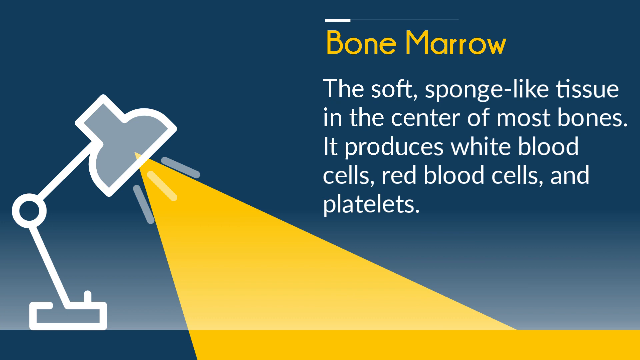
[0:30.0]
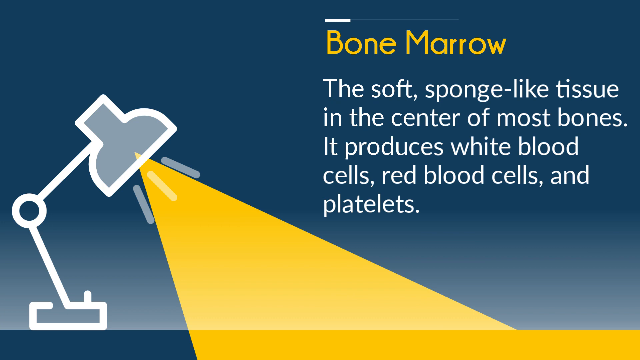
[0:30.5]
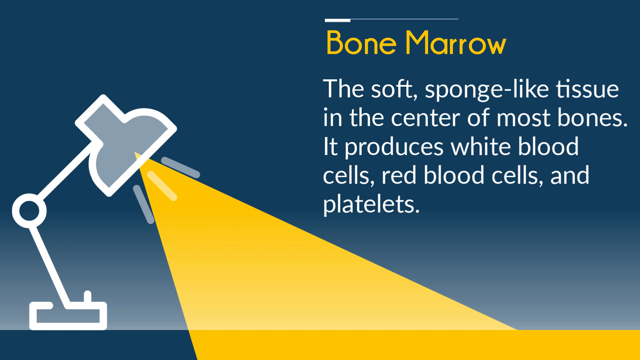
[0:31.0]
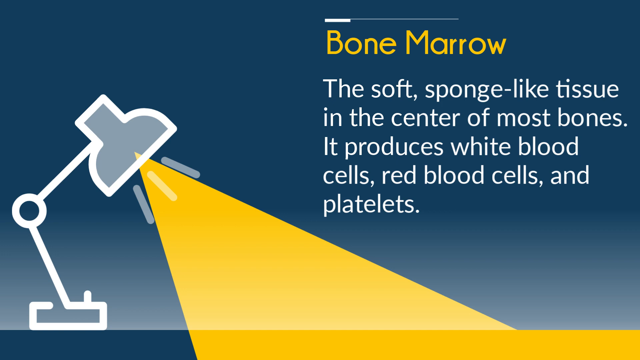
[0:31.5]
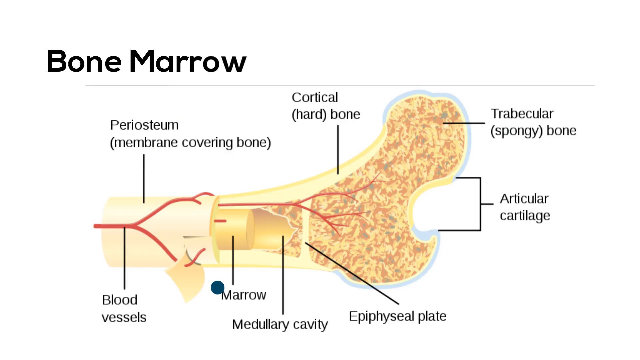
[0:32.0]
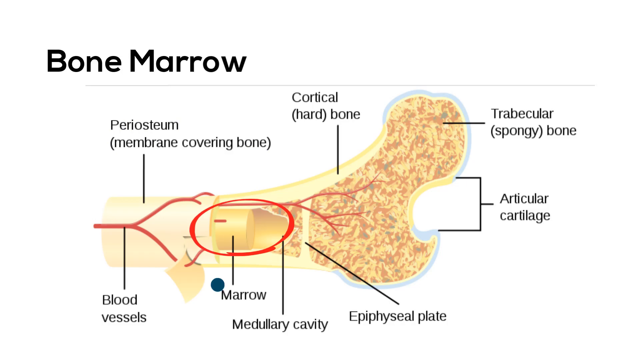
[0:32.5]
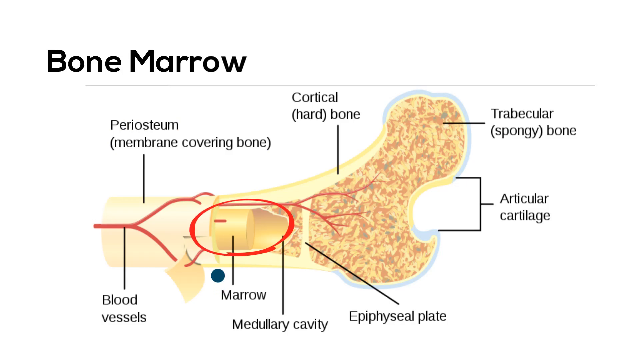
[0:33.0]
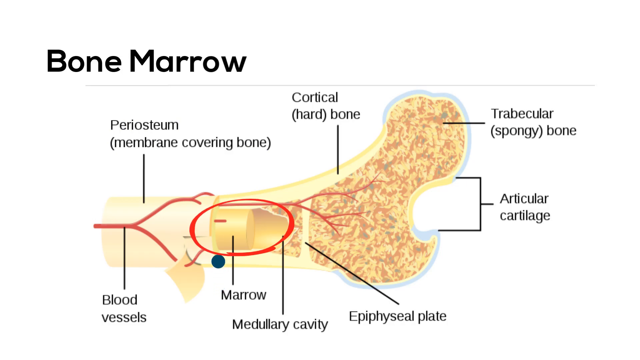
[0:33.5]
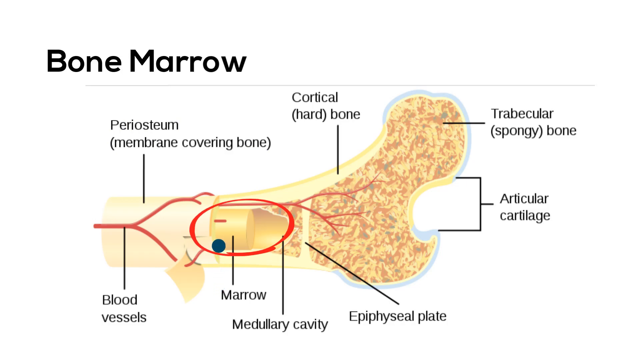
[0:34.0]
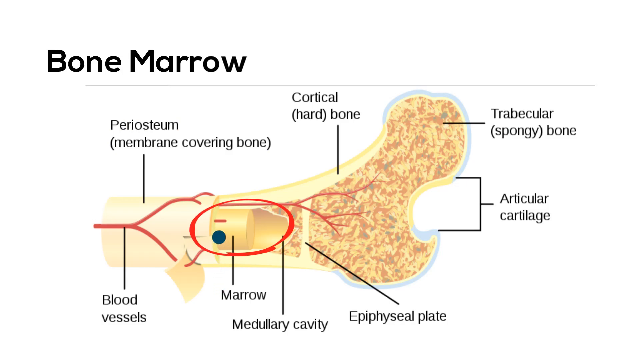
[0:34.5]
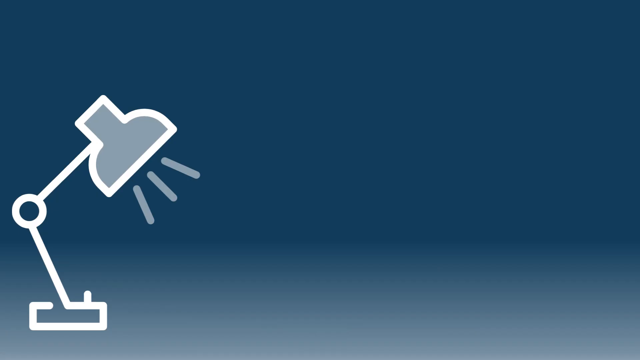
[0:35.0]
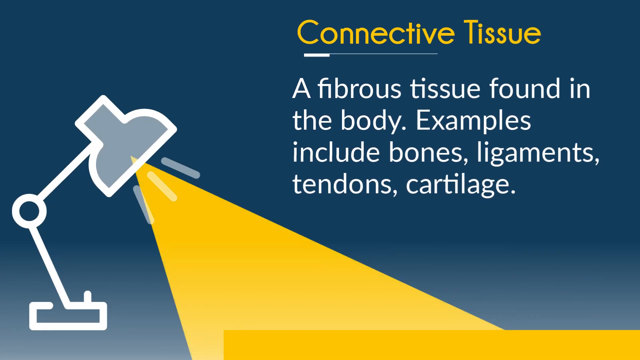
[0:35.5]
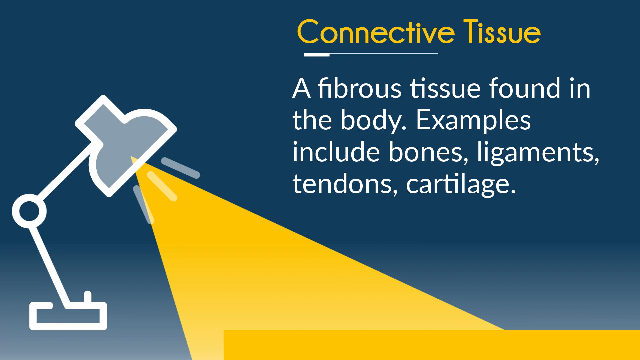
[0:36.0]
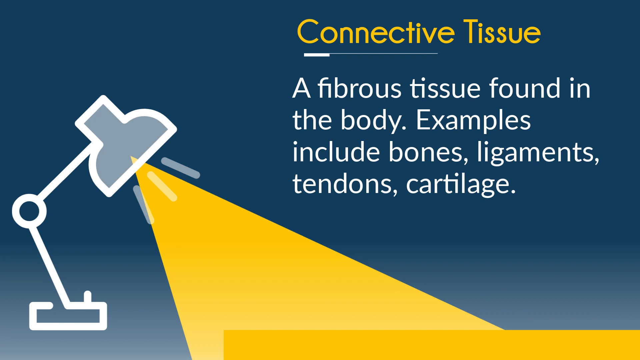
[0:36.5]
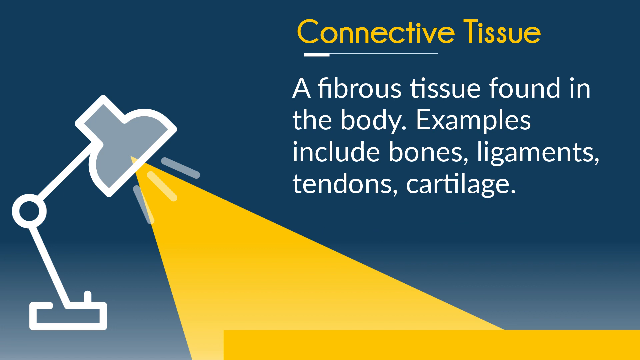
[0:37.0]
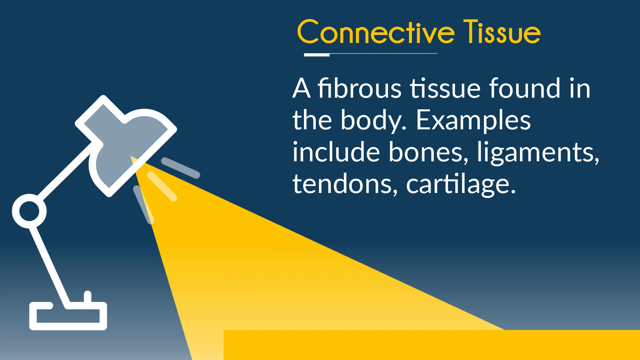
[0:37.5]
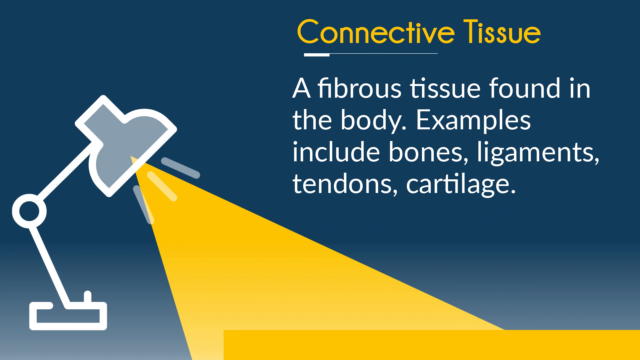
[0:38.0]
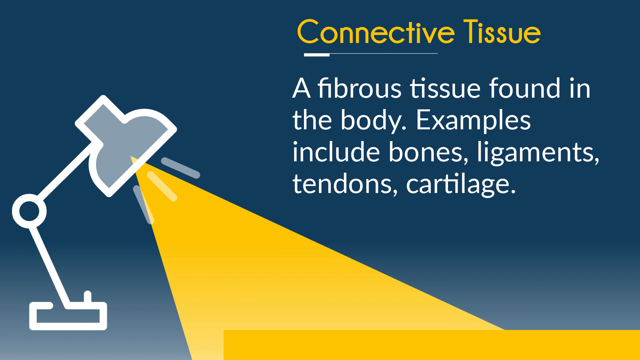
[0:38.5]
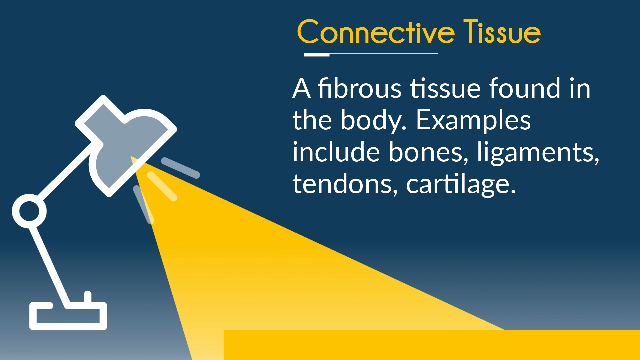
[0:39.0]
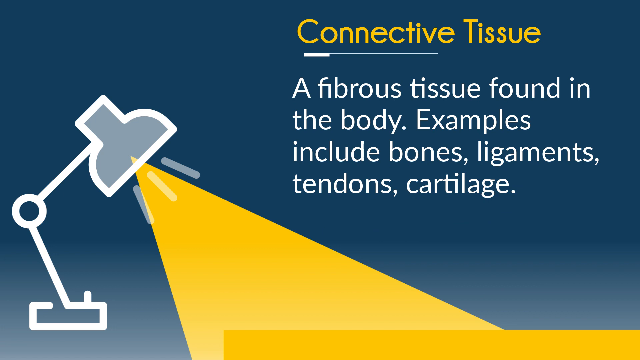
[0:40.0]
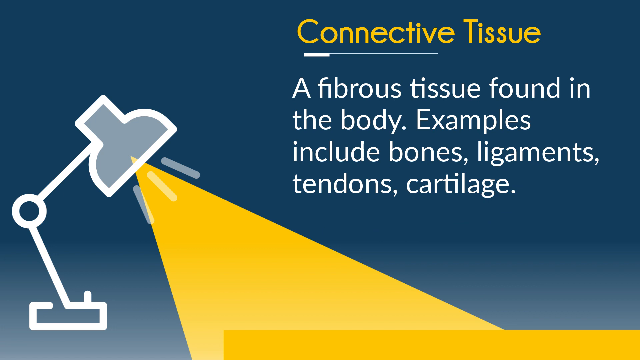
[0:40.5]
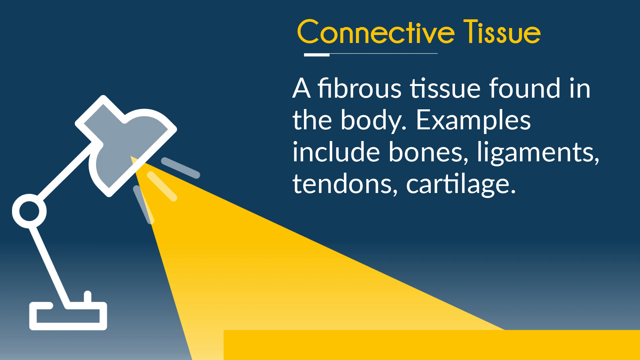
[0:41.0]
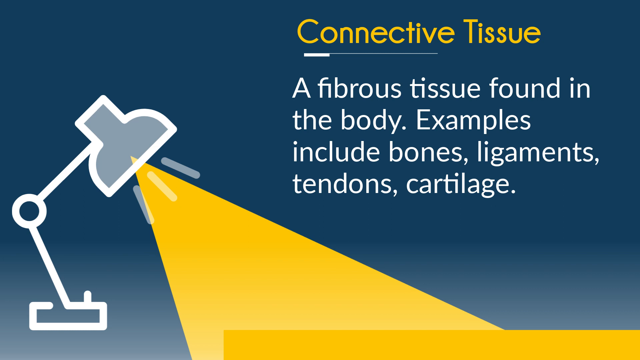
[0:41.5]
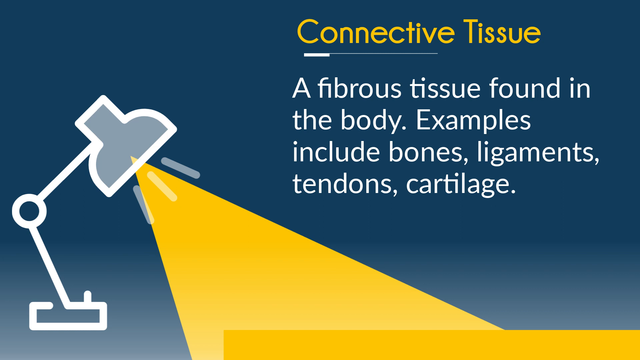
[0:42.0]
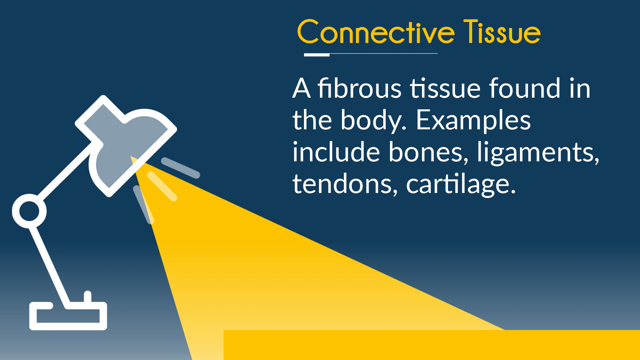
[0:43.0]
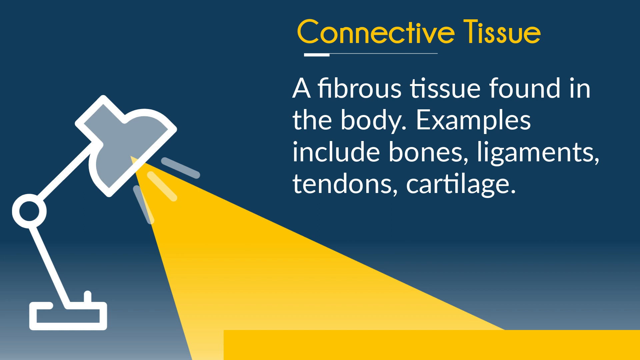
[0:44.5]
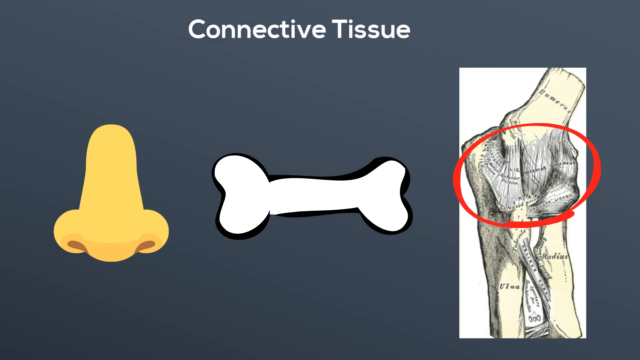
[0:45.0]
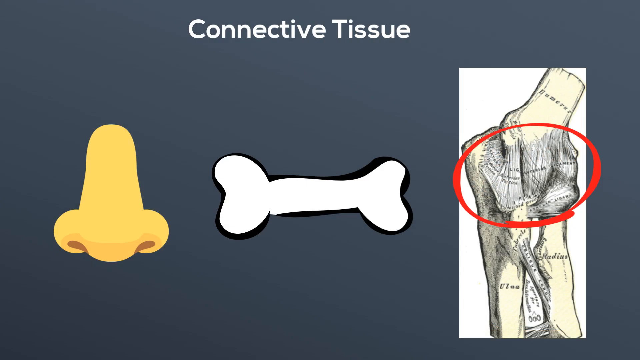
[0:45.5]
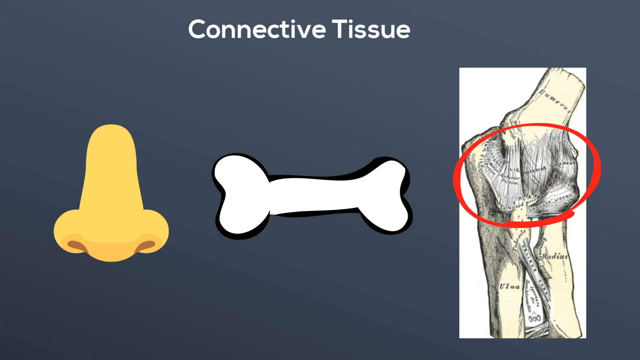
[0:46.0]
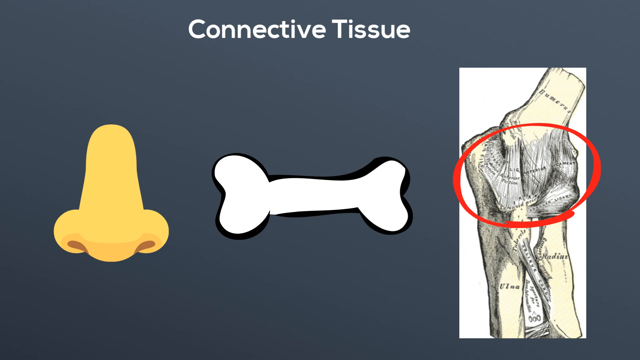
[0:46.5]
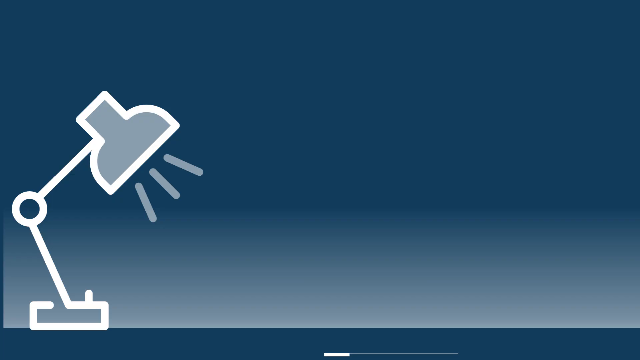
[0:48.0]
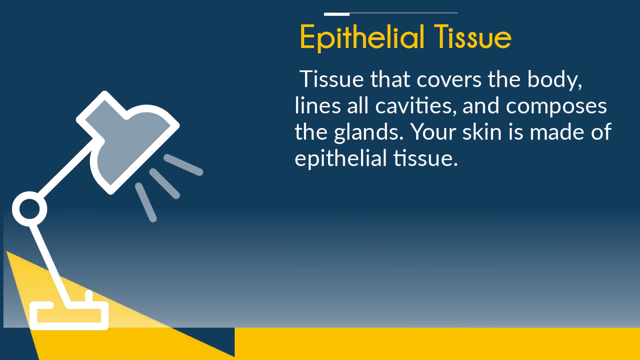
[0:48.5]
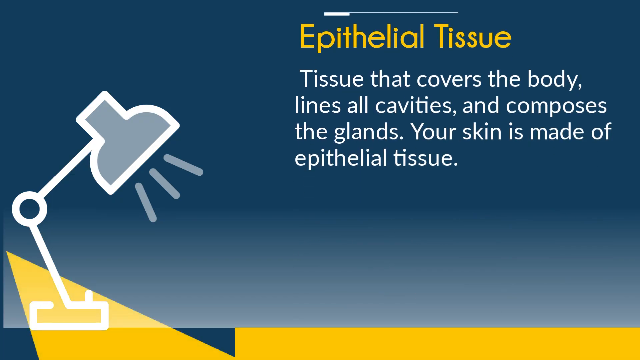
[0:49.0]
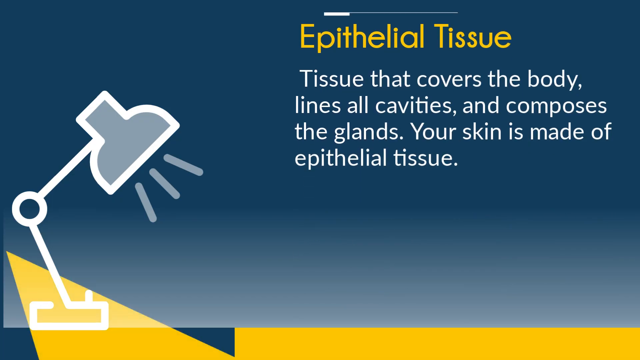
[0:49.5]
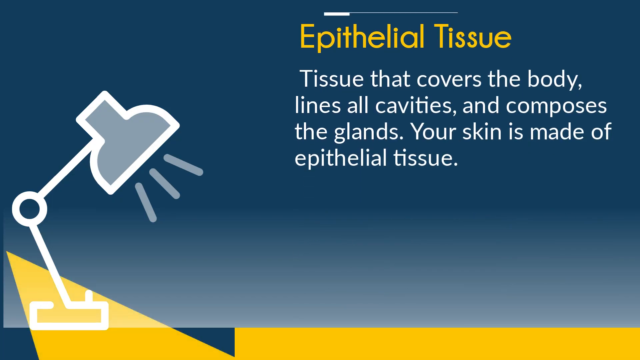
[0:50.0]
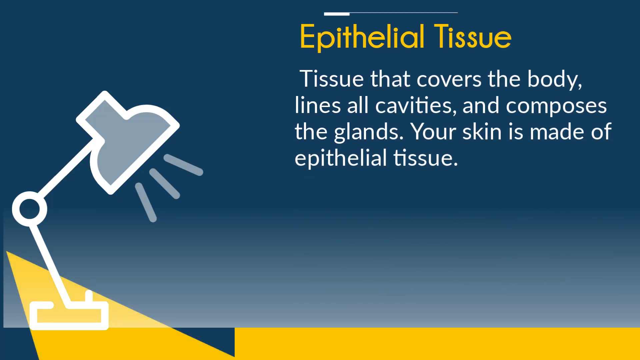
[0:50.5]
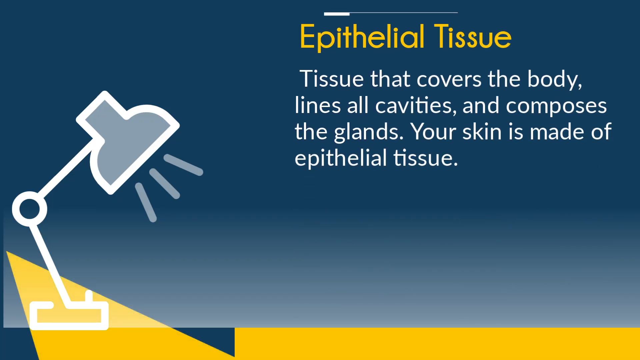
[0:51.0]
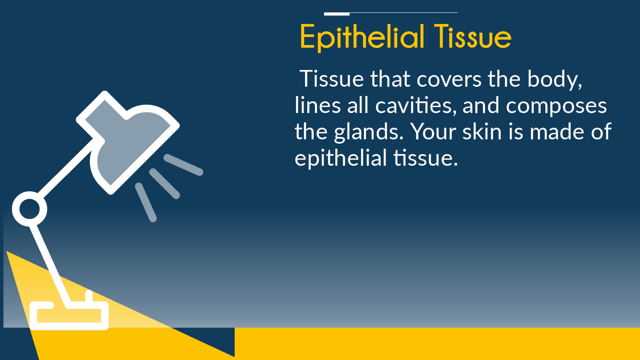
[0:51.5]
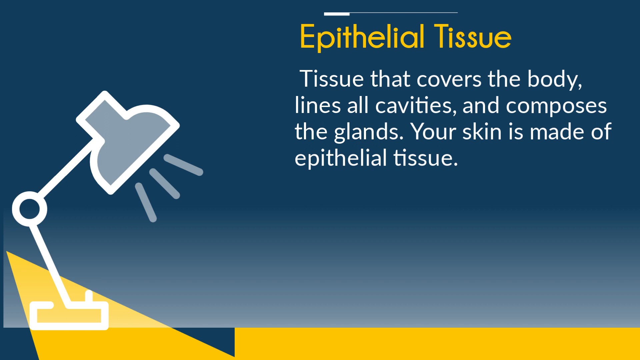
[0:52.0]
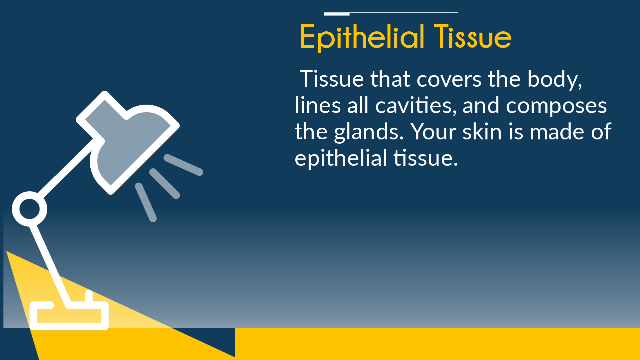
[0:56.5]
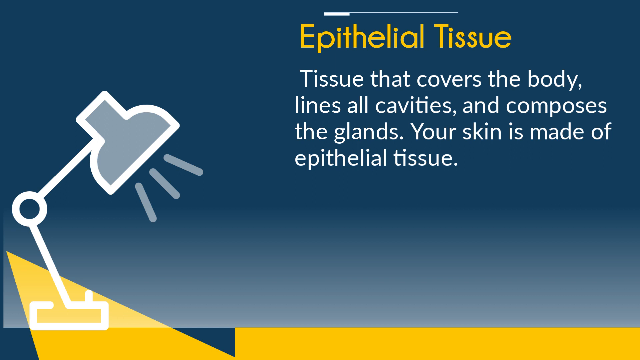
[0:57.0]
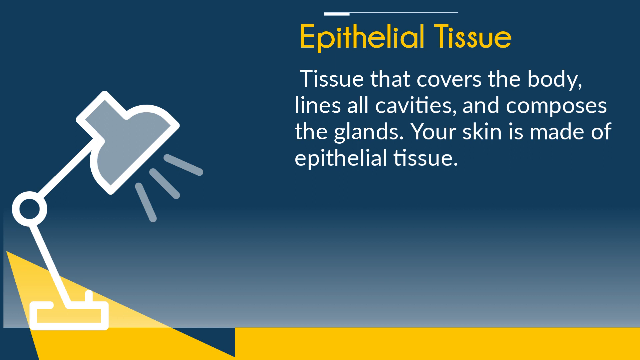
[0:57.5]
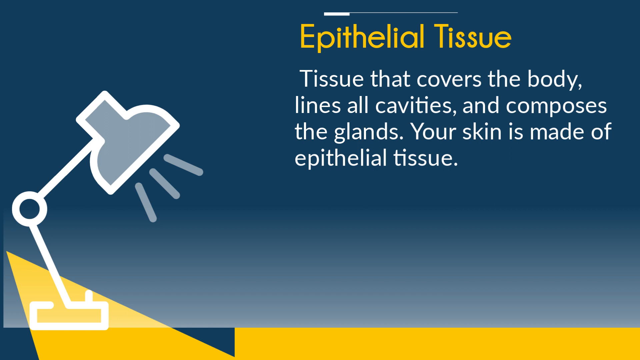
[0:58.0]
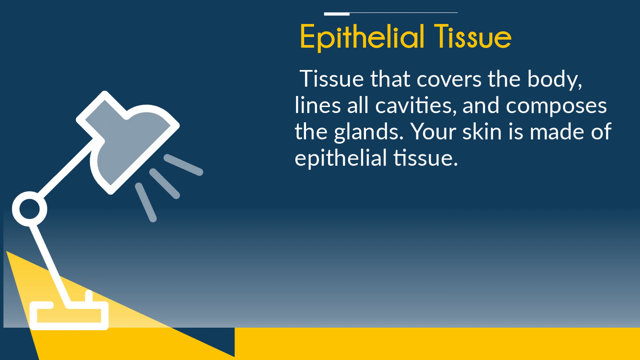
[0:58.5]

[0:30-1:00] A cartoon desk lamp beams light from top to bottom beside the definition of bone marrow: "the soft sponge-like tissue in the center of most bones. It produces white blood cells, red blood cells, and platelets." The scene transitions to a diagram of bone marrow, with words indicating where specific parts are, including "cortical" and the marrow in the center. The video then returns to the desk lamp page with a new word, "connective tissue", defined as "a fibrous tissue found in the body. Examples include bones, ligaments, tendons, and cartilage." Next, three different kinds of organs are shown: a nose, a bone, and a connective tissue. Another definition page then introduces the word "epithelial tissue", stating that it is tissue that covers the body, lines all cavities, and composes the glands, followed by "Your skin is made of epithelial tissue."